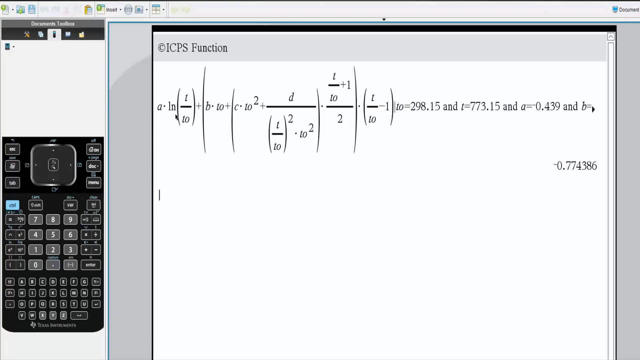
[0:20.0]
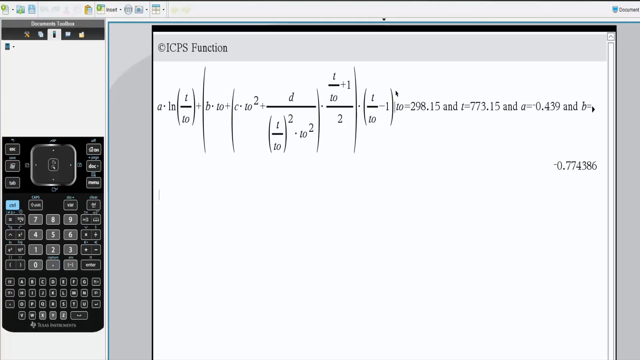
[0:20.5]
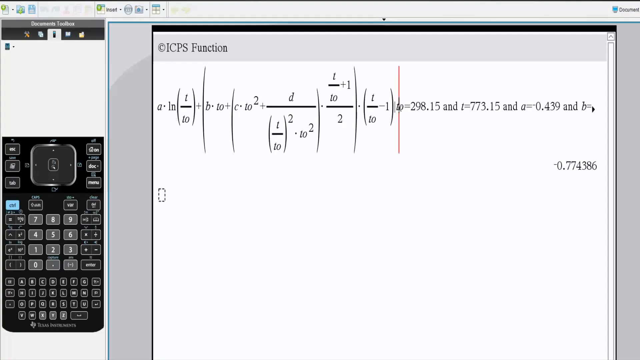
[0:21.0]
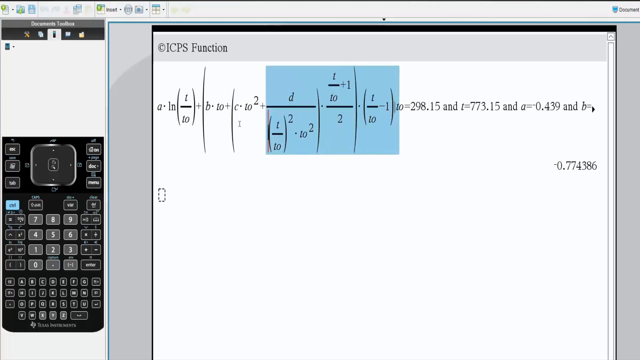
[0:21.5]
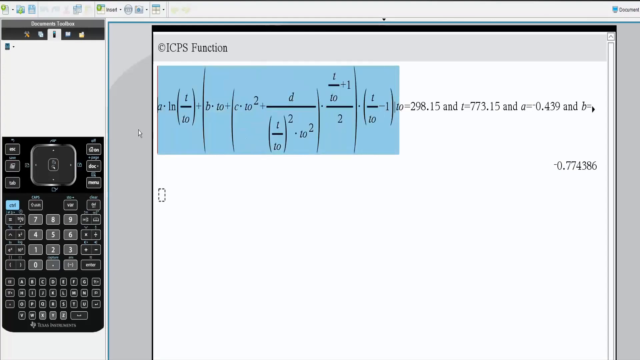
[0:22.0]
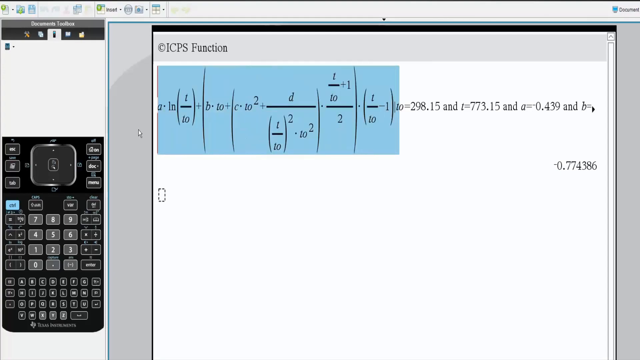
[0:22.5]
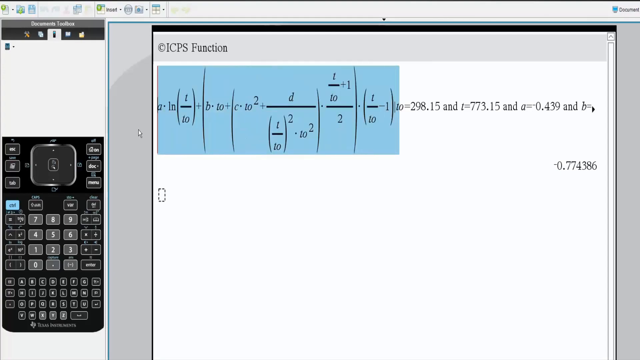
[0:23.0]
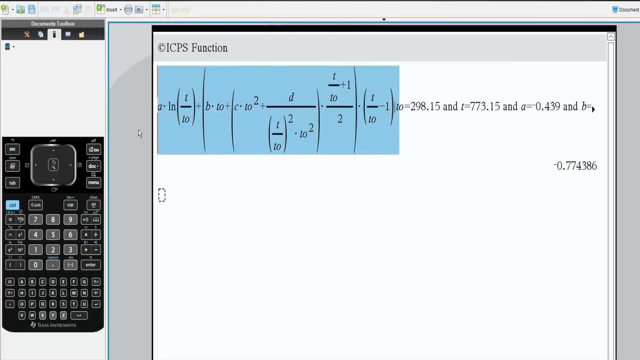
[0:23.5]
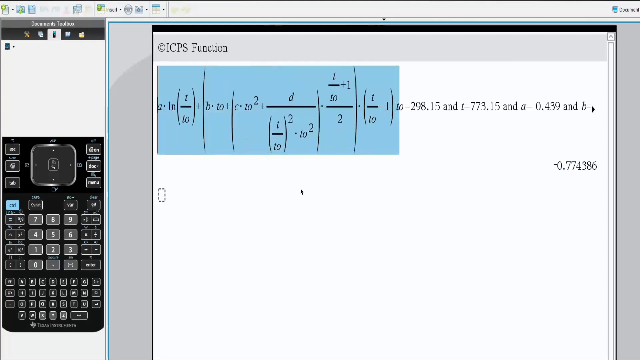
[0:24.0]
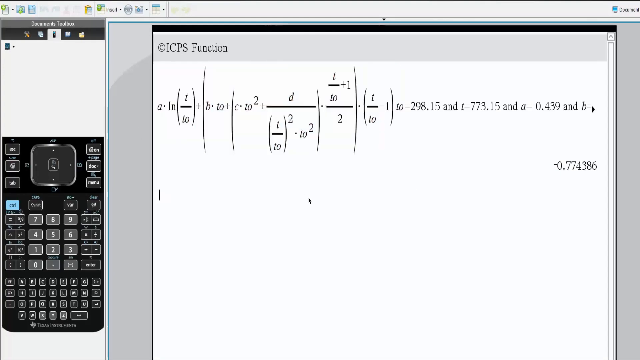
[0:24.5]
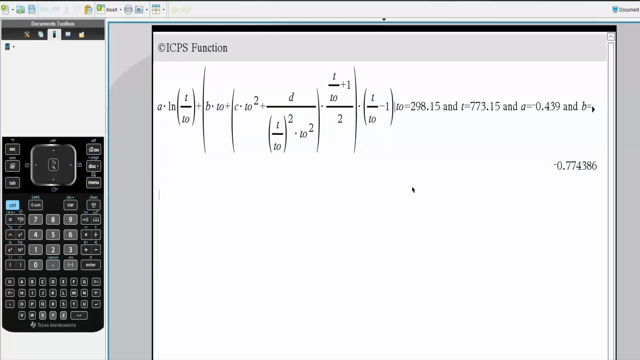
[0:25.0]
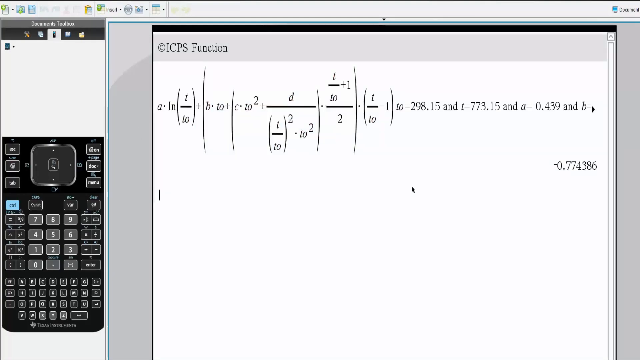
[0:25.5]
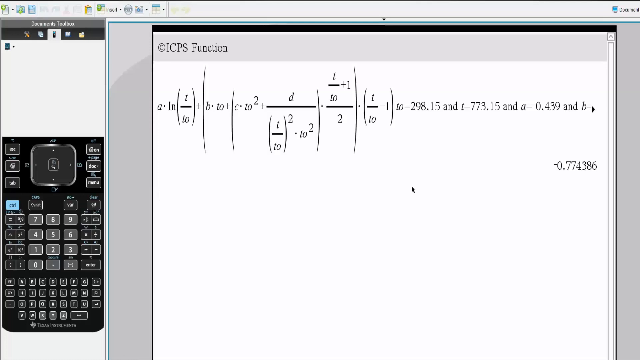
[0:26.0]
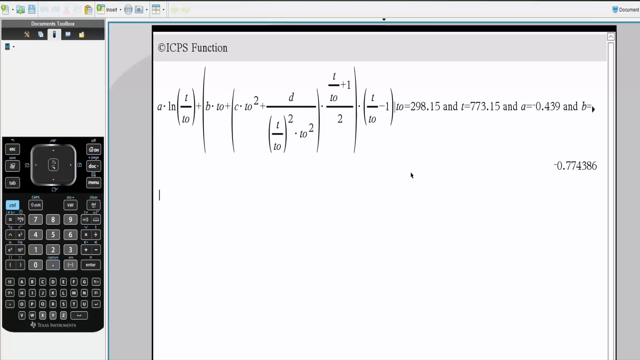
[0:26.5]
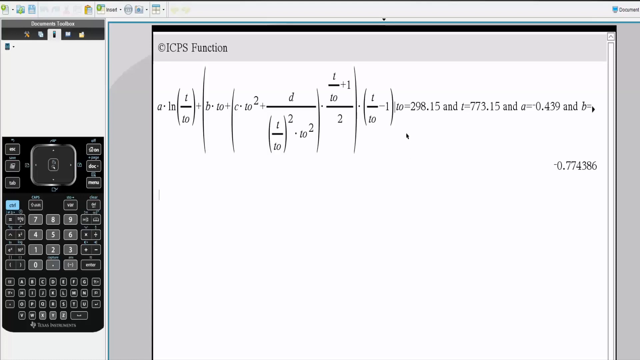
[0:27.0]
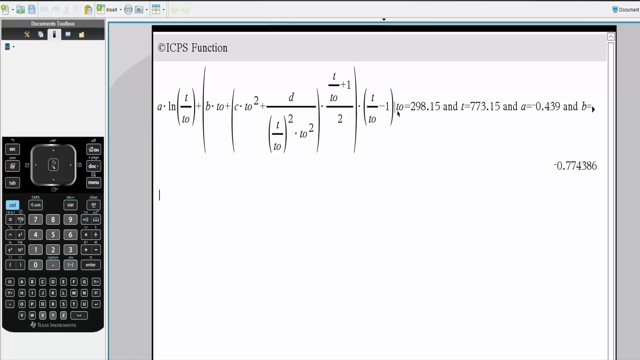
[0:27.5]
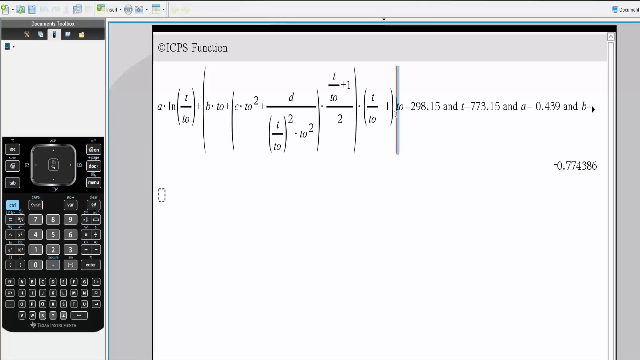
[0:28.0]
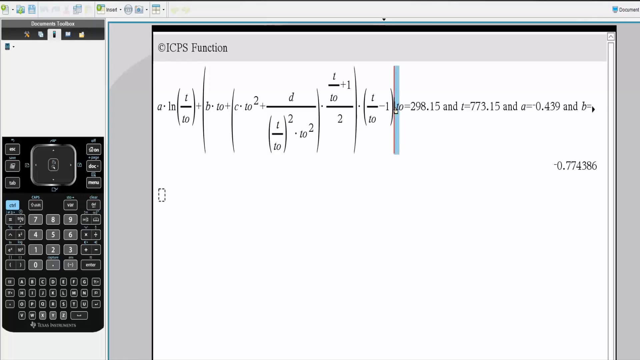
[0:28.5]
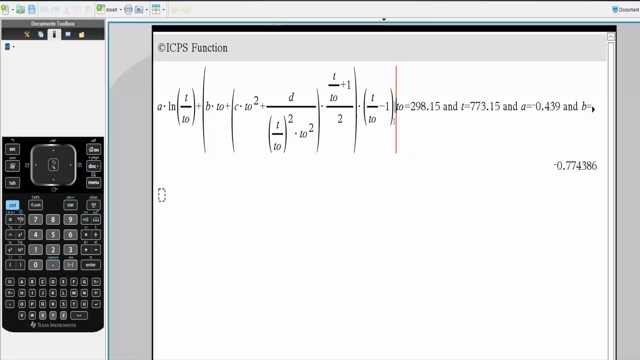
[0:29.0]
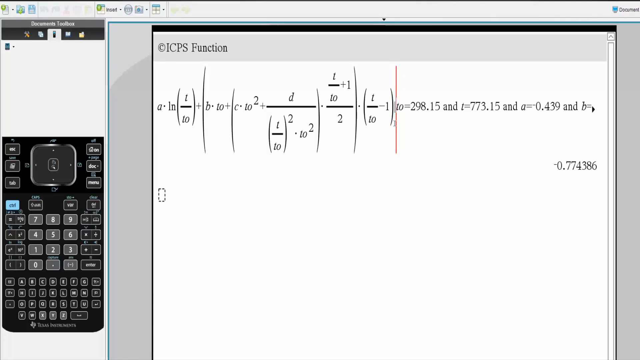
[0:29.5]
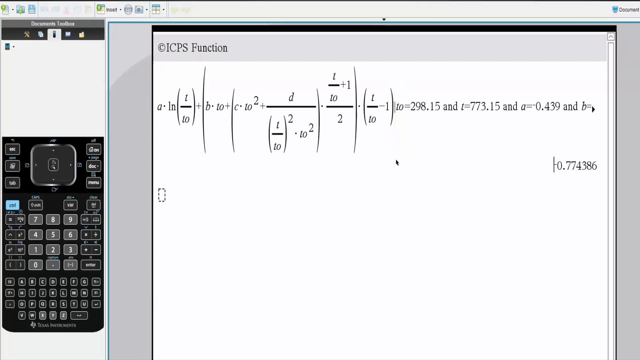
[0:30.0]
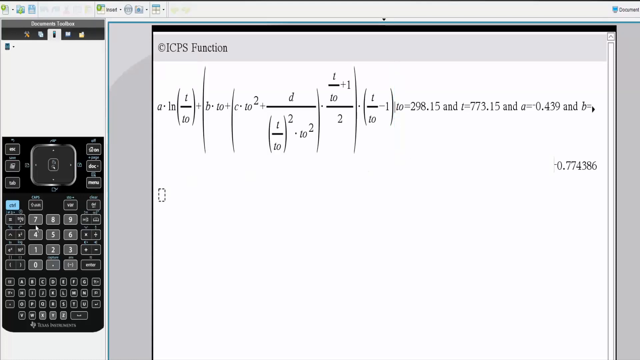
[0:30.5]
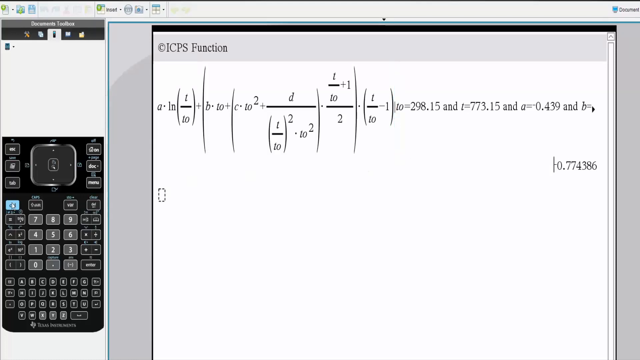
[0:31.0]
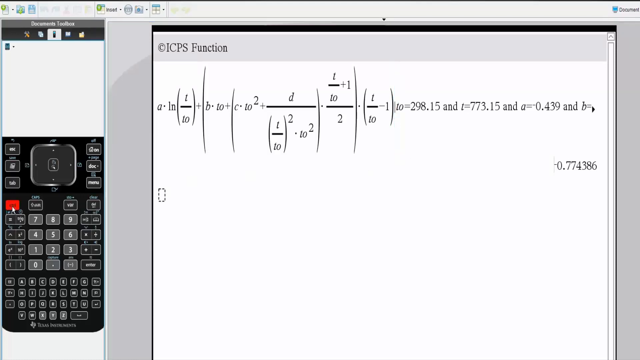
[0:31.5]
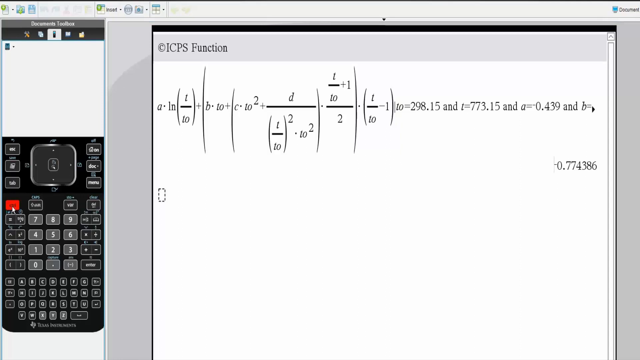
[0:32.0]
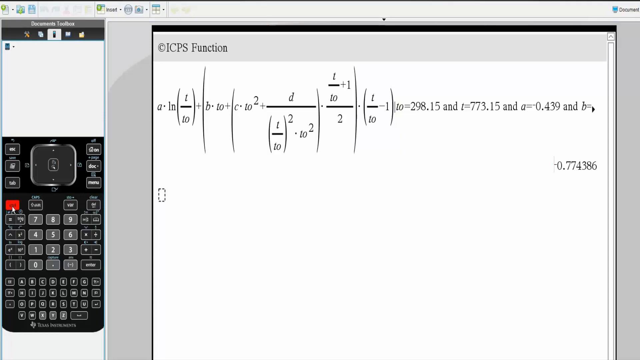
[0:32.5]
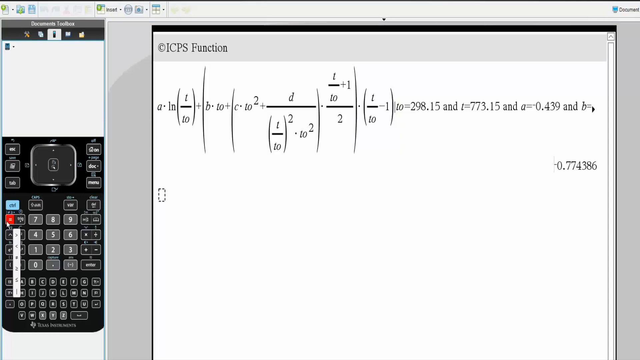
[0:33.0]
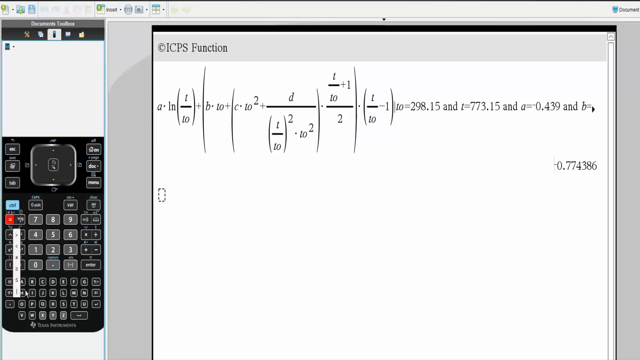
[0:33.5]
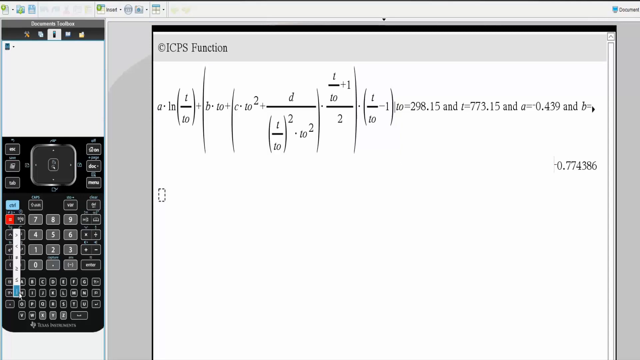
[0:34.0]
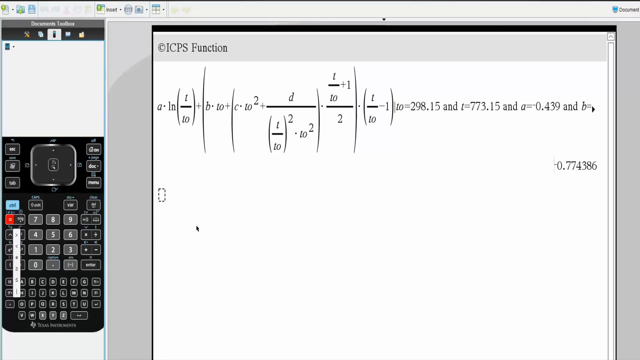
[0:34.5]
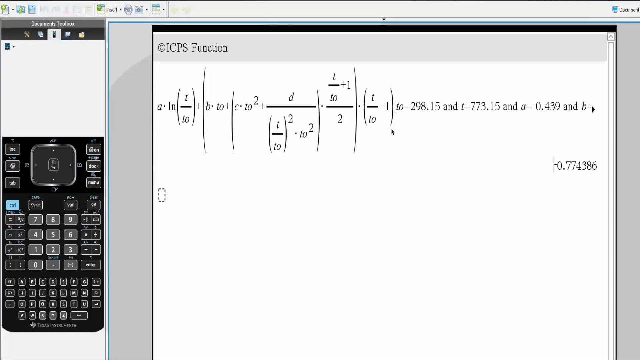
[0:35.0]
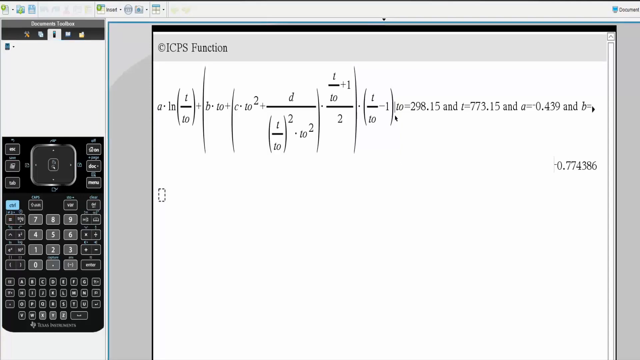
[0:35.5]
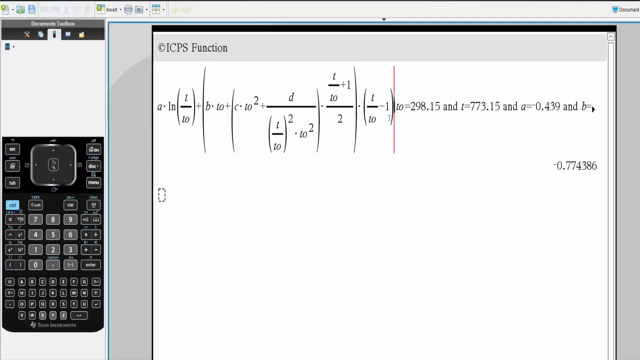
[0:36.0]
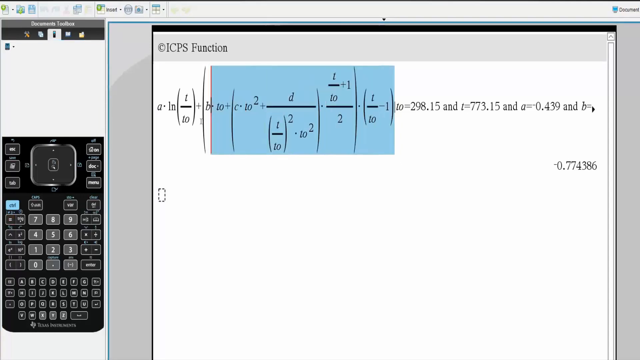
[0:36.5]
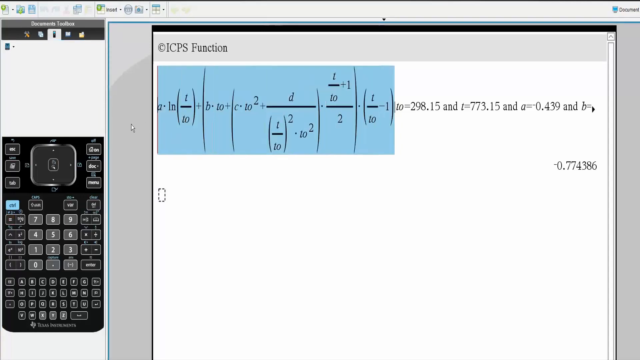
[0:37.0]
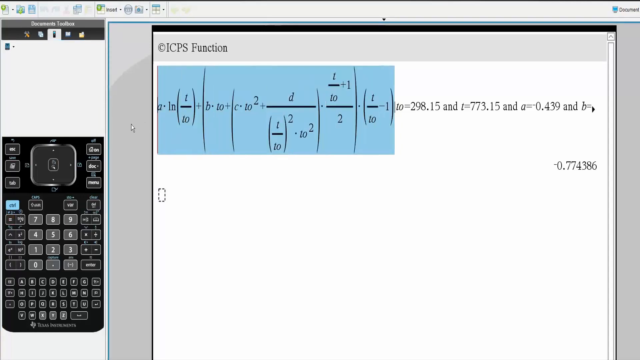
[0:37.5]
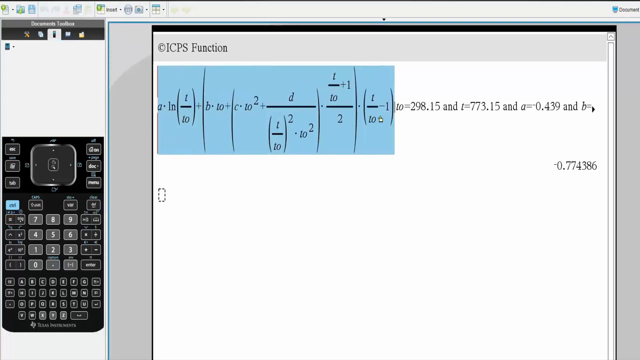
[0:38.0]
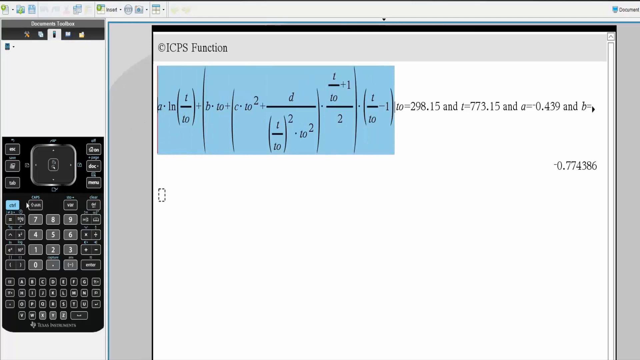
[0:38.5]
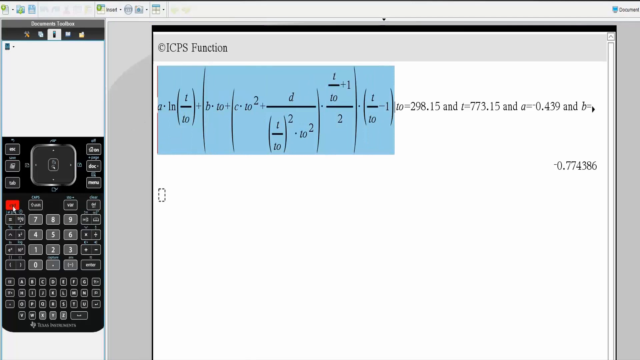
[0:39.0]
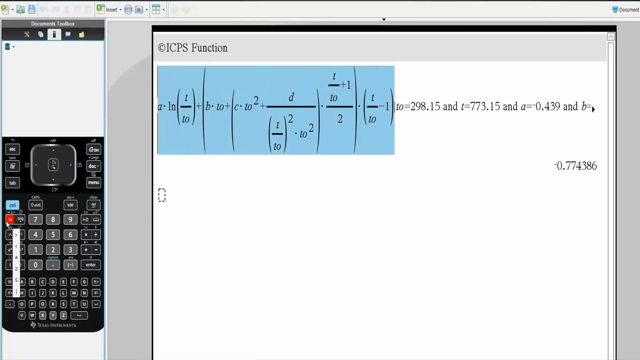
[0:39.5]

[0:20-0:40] The screen now shows a calculator application on the left-hand side, where it seems sections of the formula can be pasted or typed in manually. On the right side is a notebook-looking section containing the same function, with "ICPS function" at the top and an answer at the bottom right reading -0.774386. The cursor goes over to click a button on the calculator, then highlights portions of the function and goes back to click on the calculator. The calculator and the notepad app appear to be related, with sections of the formula seemingly highlighted and manipulated using the calculator.